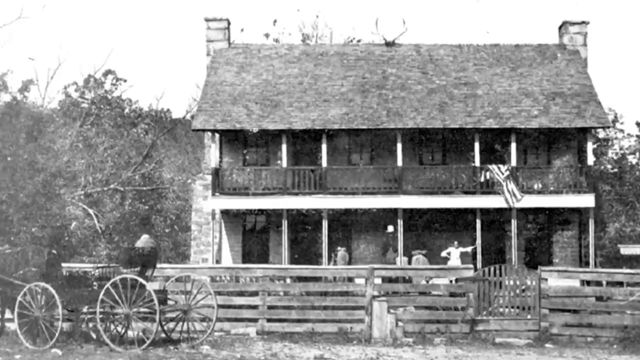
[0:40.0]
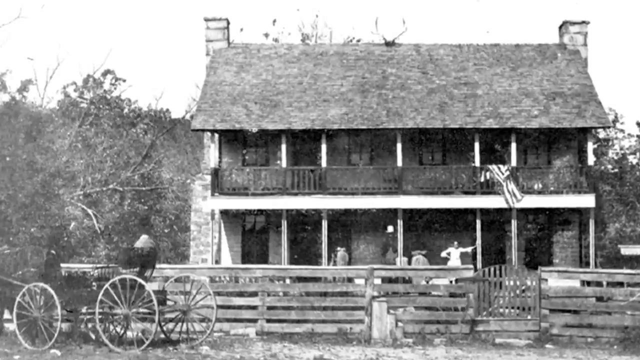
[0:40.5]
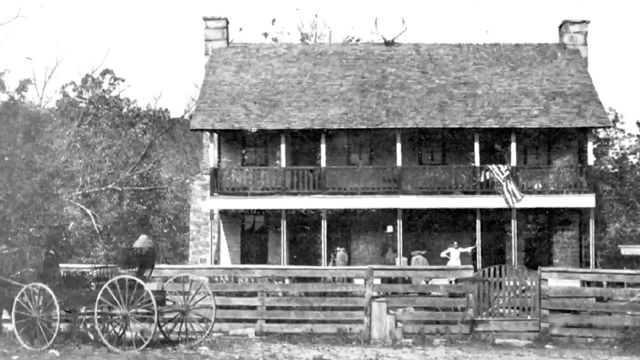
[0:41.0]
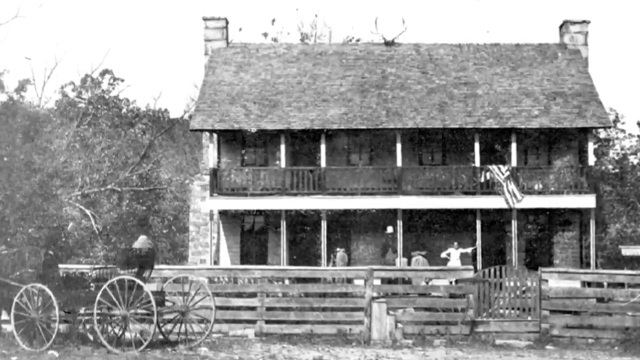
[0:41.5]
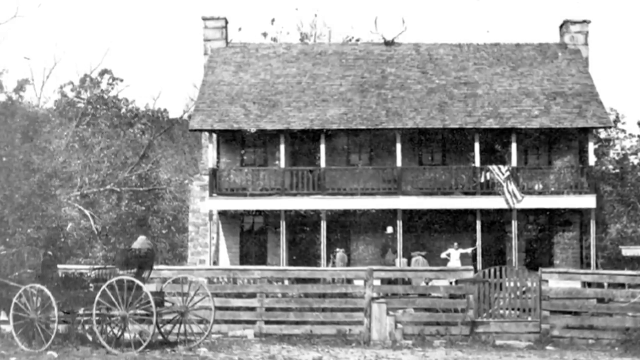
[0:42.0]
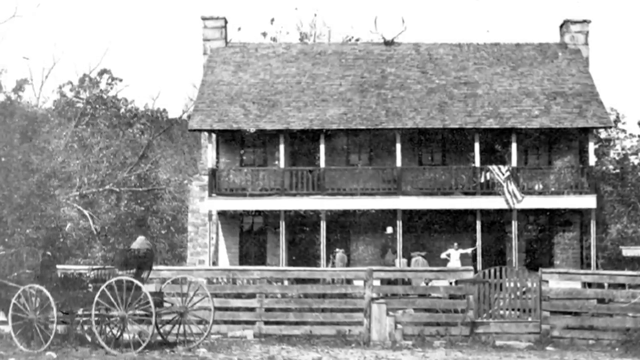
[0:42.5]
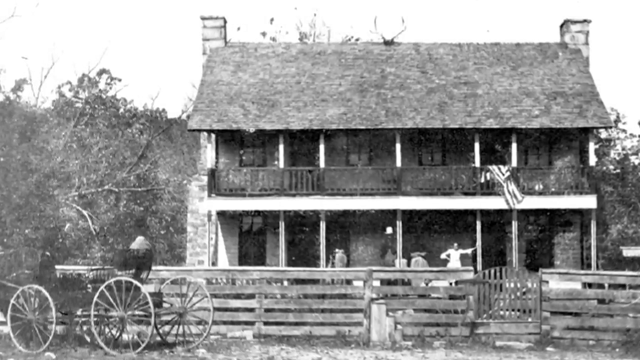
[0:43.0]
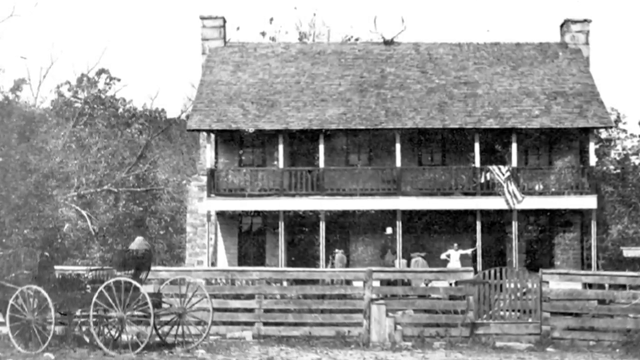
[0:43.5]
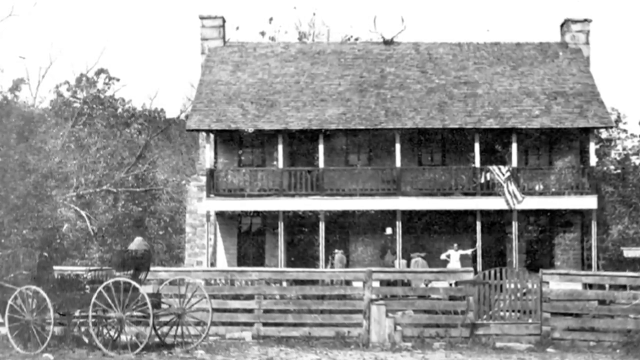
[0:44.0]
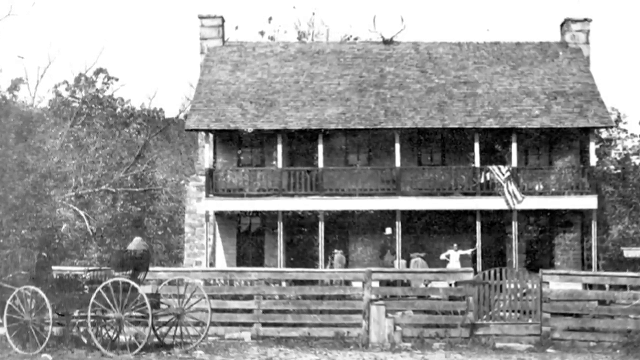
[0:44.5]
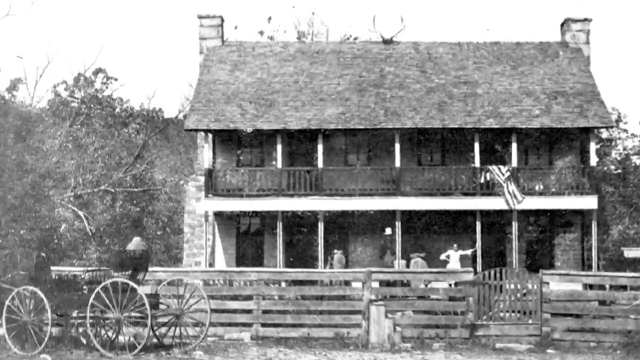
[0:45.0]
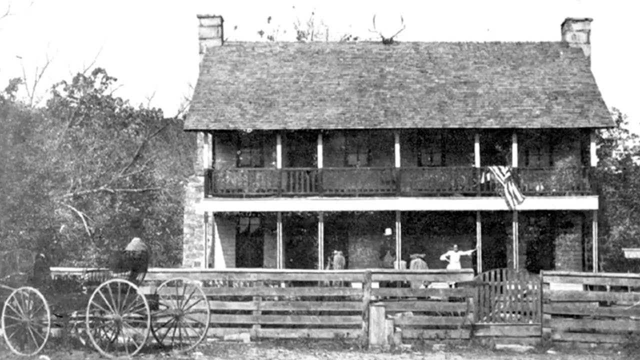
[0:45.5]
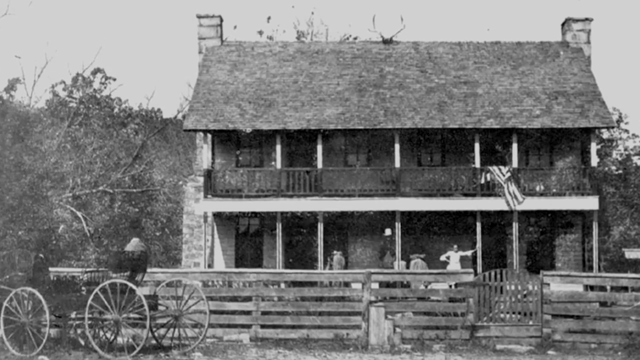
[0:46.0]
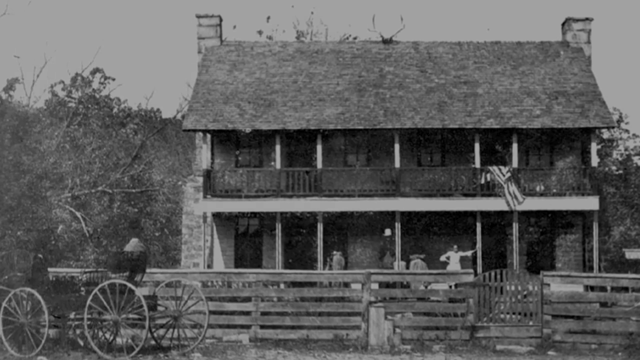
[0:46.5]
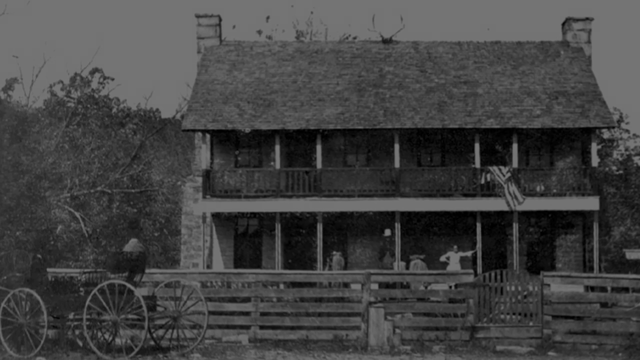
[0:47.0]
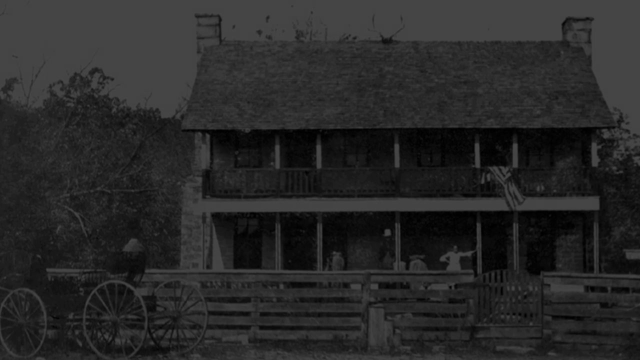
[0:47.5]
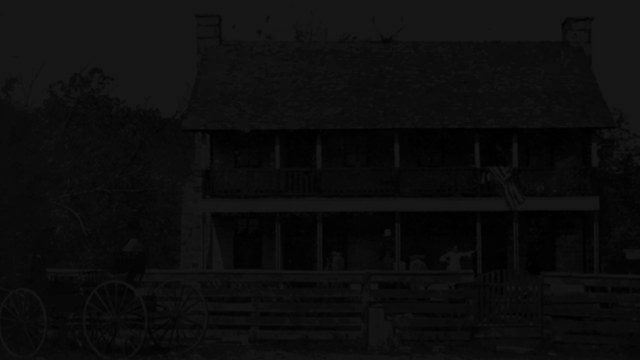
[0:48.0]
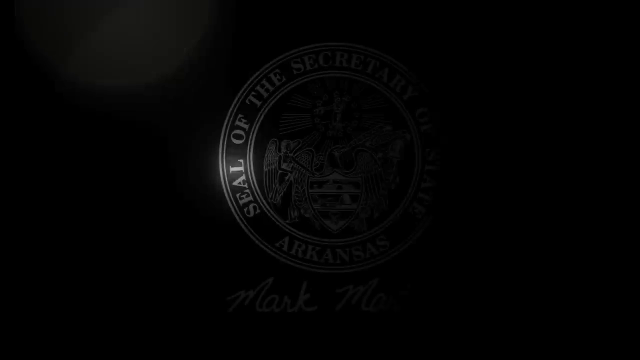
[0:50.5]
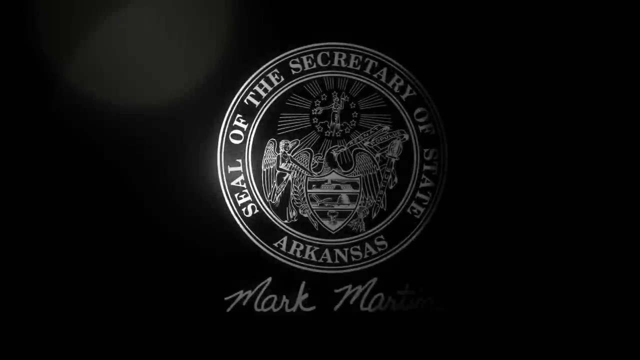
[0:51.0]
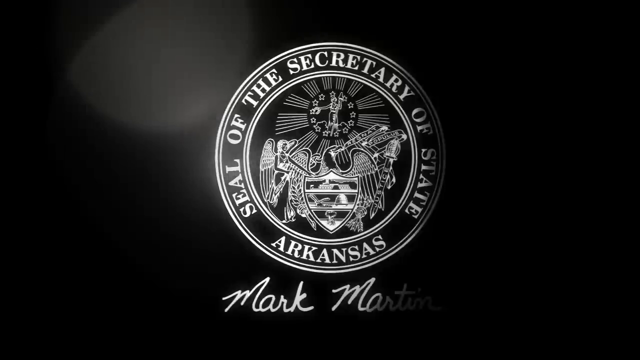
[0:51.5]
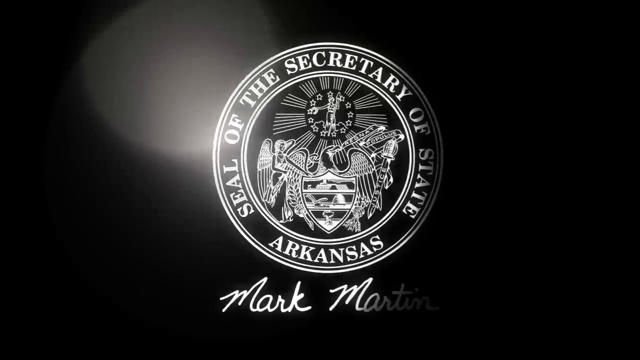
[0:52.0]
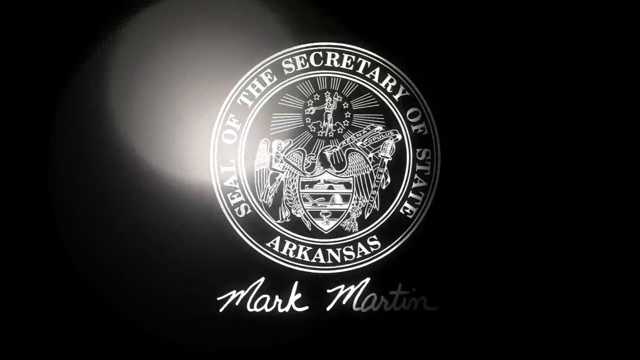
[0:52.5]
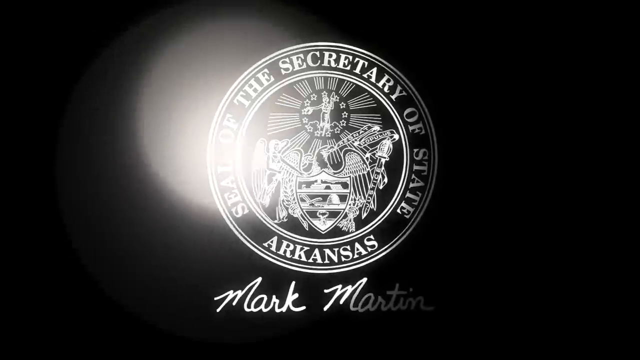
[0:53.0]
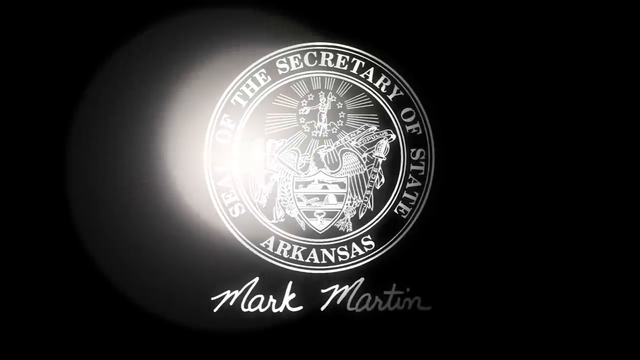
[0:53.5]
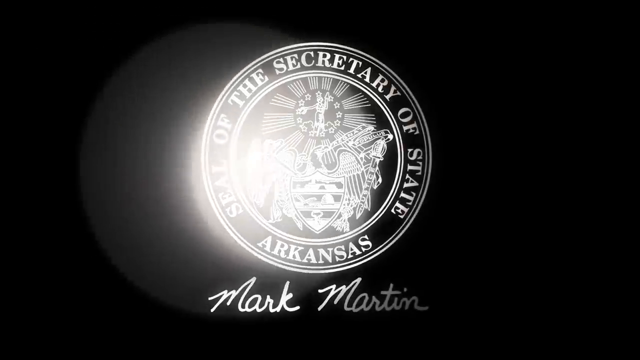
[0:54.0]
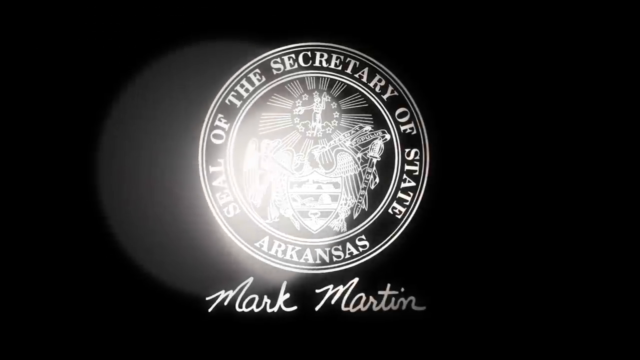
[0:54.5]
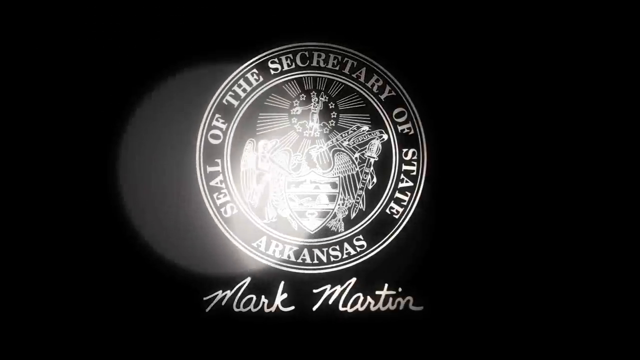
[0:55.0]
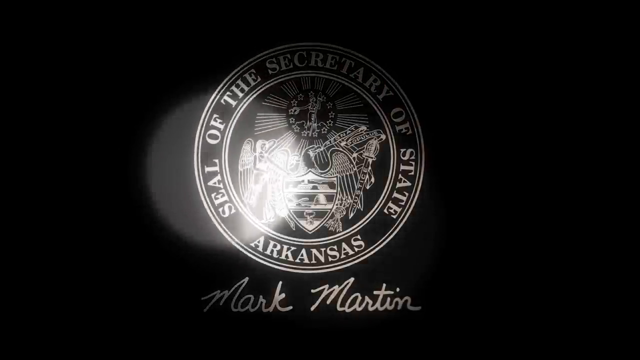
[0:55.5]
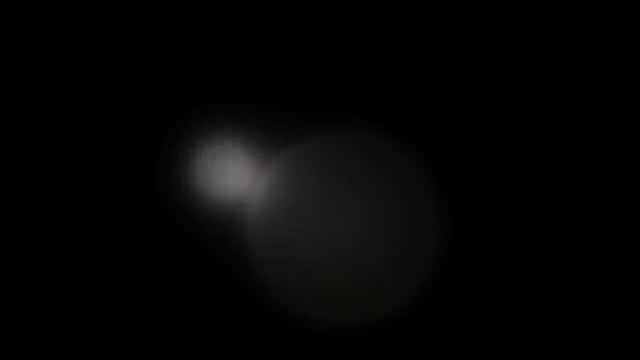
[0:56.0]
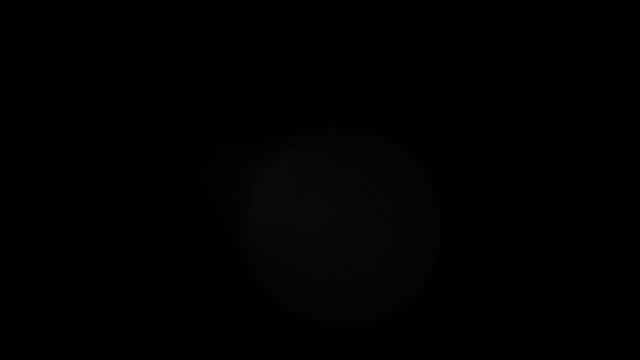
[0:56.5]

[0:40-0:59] A black-and-white photo shows a two-story house with two chimneys, one on the left and one on the right. A flag is draped across the balcony of the upper story. On the first-story porch, a woman in a white dress leans her left hand onto a post or column while her right hand is at her side. A wooden fence is in front of the house, with a wagon on the left in front of it, and trees are visible in the background on the left and right. The video slowly zooms in toward the house. Other people are visible in the house: a woman on the right side has her arms crossed and leans back so that her upper body is covered in shadow, and to her right a person stands at the porch. The video slowly fades to black. It fades back in on a black background, with a lens flare moving down and to the right from the upper left corner over a black-and-white seal of the Secretary of State of Arkansas. In the middle of the seal is an eagle with a shield in front of it. To the left of the eagle is an angel, and above the eagle is a woman holding a mop, with several stars all around her and sun rays emanating from her. To the right of the eagle is a sword, along with a banner that reads "Regnat Populus". Beneath the seal, white text says "Mark Martin". The lens flare continues to move to the lower right before fading out.